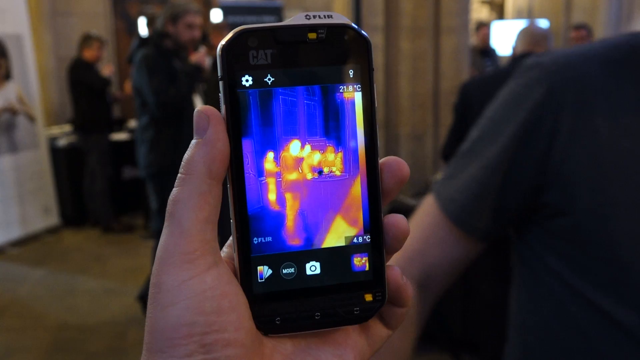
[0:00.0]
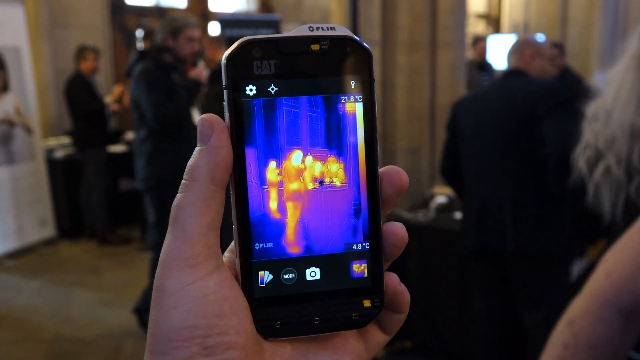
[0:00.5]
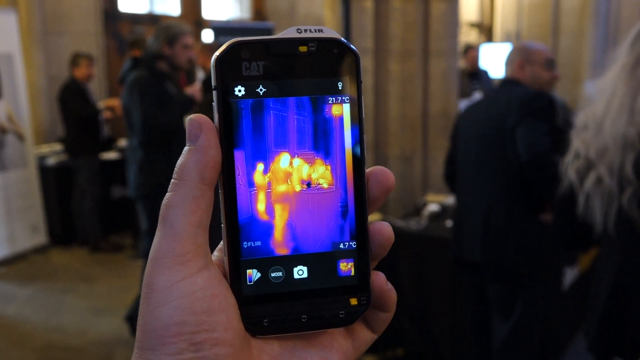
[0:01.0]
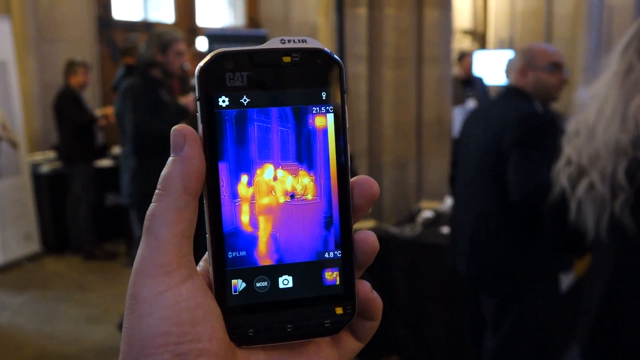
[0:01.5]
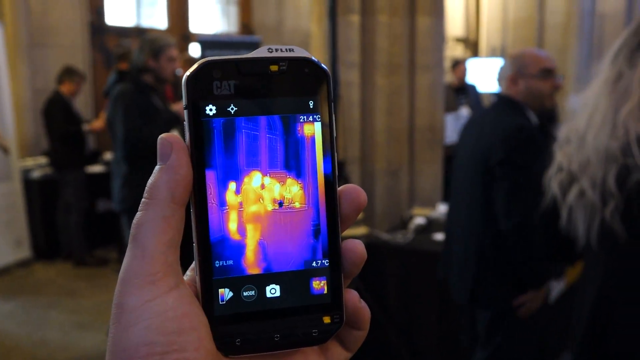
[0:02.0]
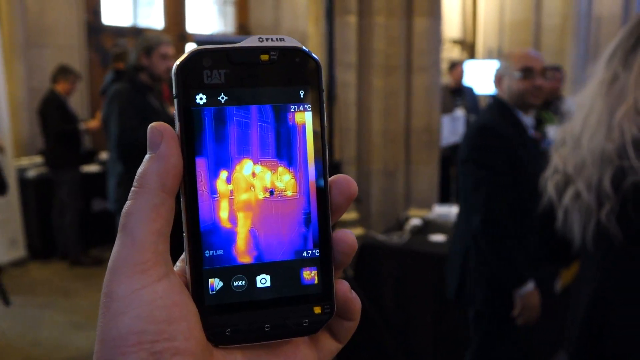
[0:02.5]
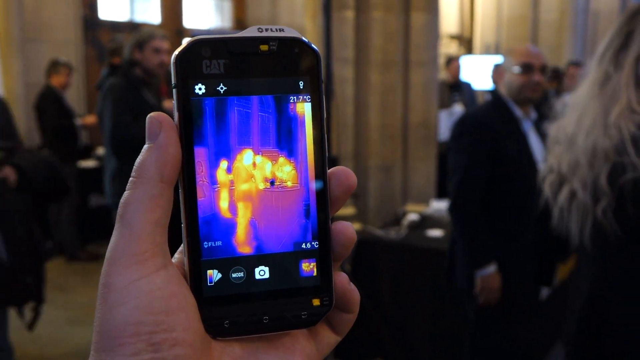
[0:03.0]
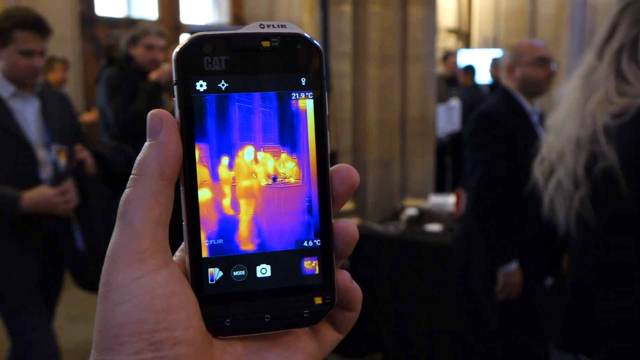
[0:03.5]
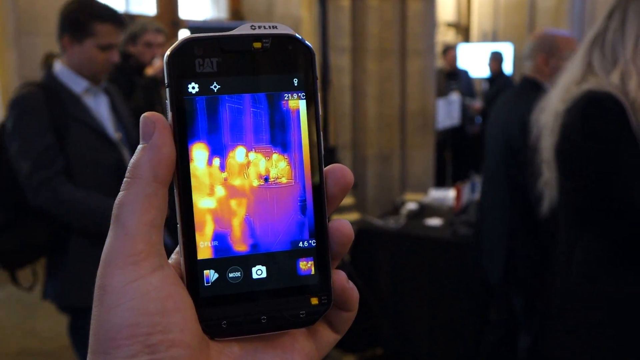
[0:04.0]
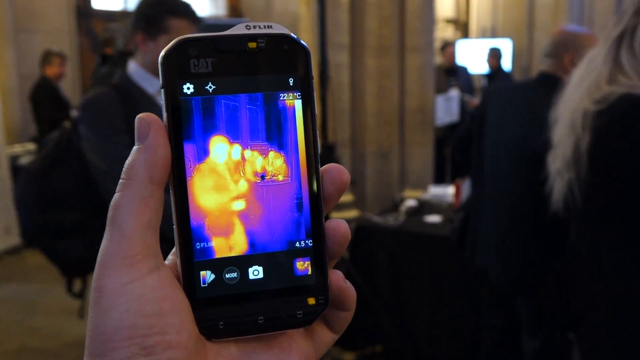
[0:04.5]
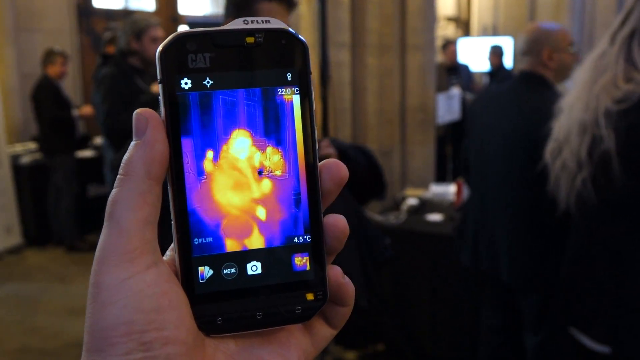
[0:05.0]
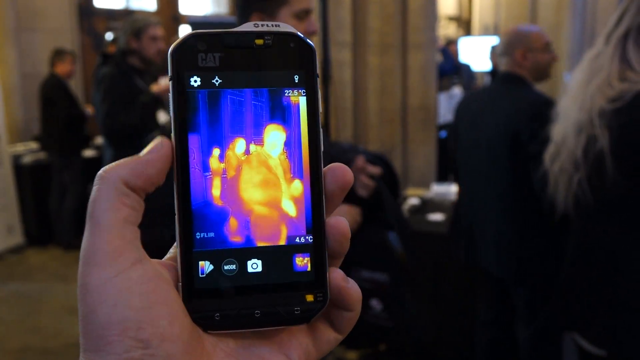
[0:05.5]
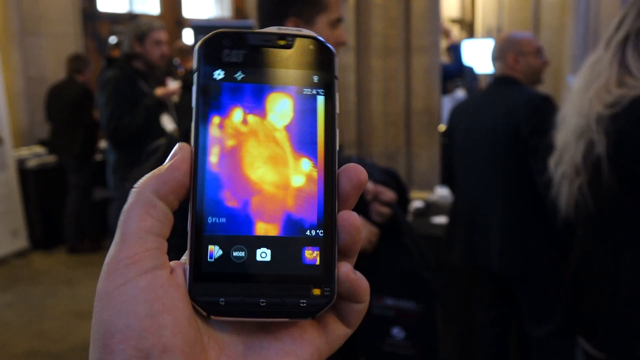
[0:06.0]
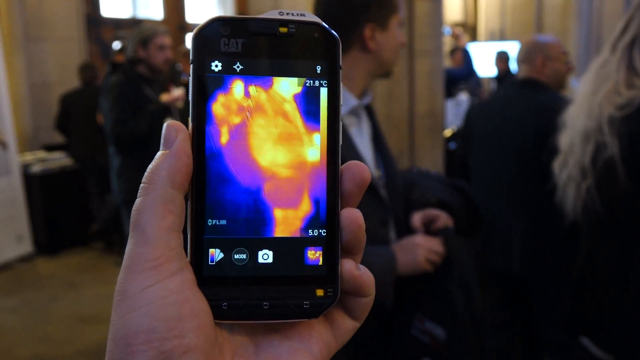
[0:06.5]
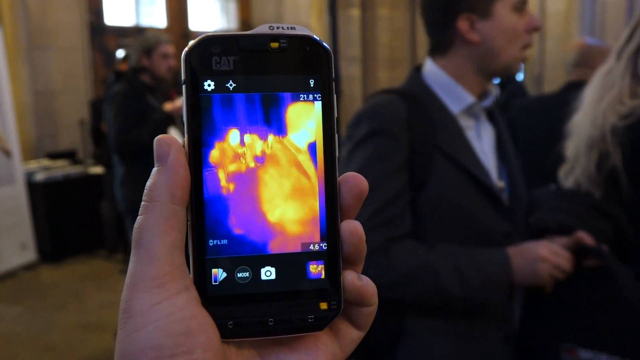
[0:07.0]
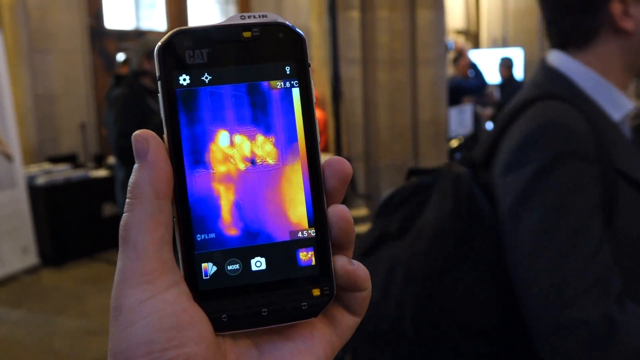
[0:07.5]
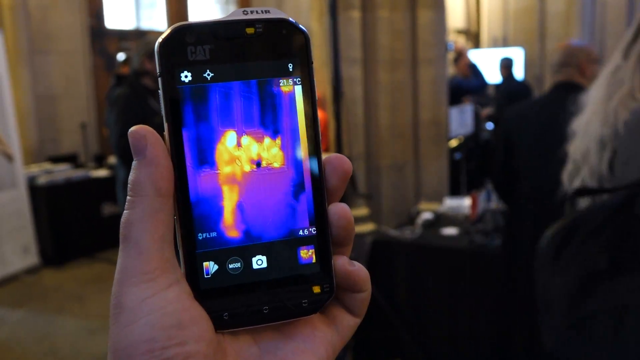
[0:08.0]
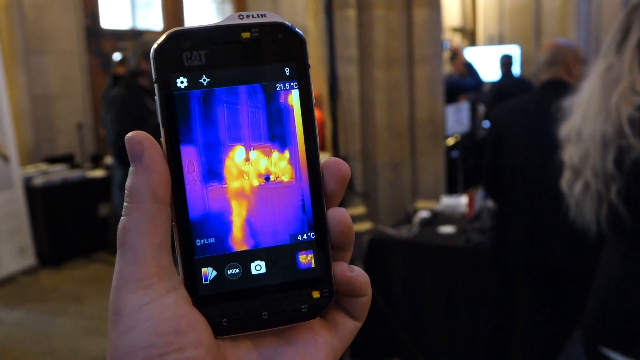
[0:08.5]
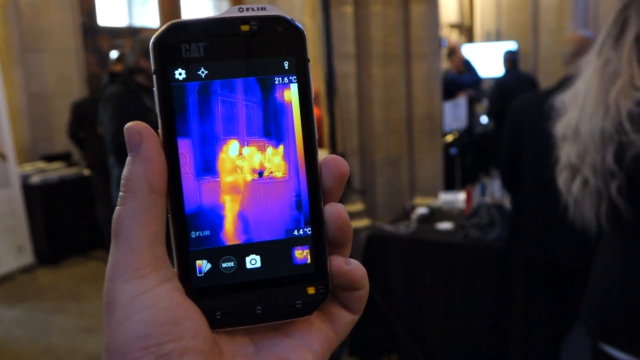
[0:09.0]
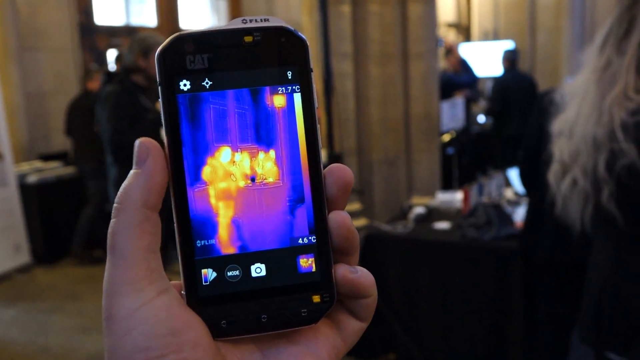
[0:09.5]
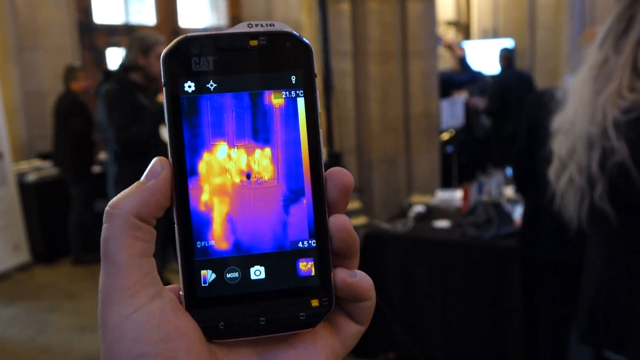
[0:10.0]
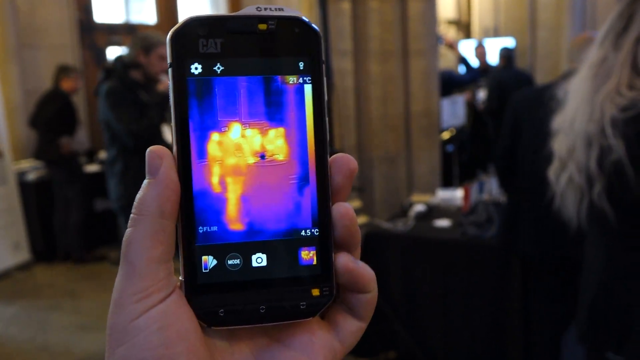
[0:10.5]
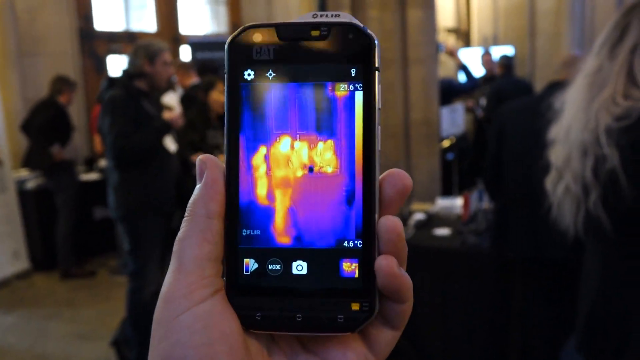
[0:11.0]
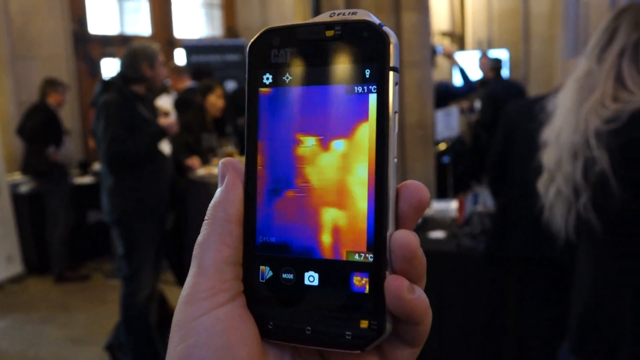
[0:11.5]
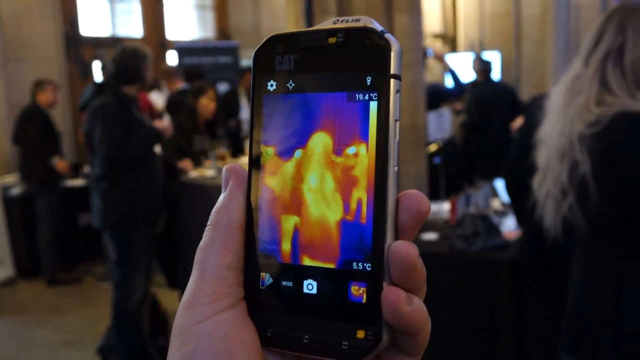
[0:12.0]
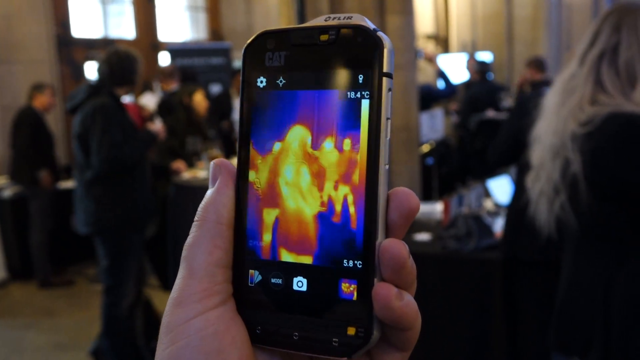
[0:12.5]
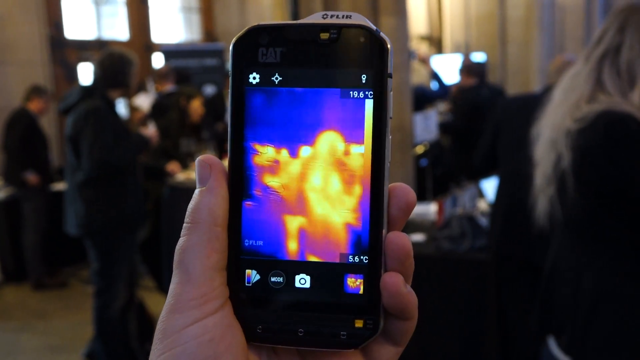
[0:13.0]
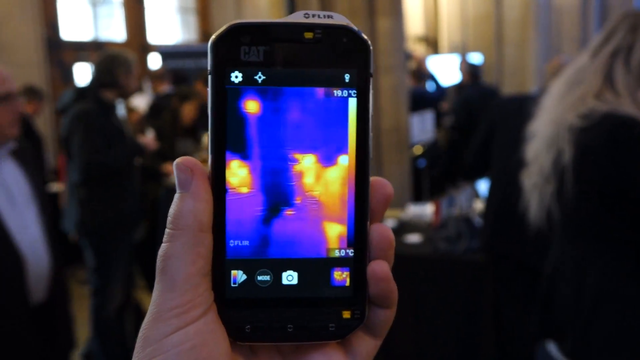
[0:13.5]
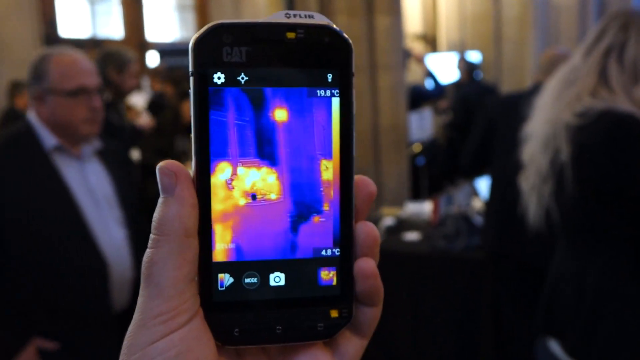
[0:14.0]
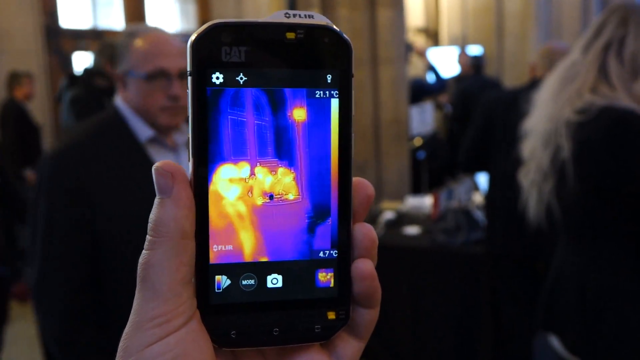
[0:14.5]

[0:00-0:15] The video, named "hands-on with the first thermal camera smartphone", opens on a close-up of what looks like a thermal camera smartphone held in a person's left hand, with a bunch of blurred people in the background. The phone's screen shows thermal imaging of people walking by, appearing as body heat signatures in reddish and blue tones; the bodies are still recognizable as people but have a reddish, yellowish tone. As a person walks by, they are seen in full in the background of the video, then walk into the phone's view and appear in thermal imagery on its screen. A temperature reading in Celsius is on the phone, and the top of the phone says "FLIR", apparently the brand name. The setting looks like a party or a business get-together with different people walking about, and the person filming seems to be filming his own hand holding the thermal imaging phone.